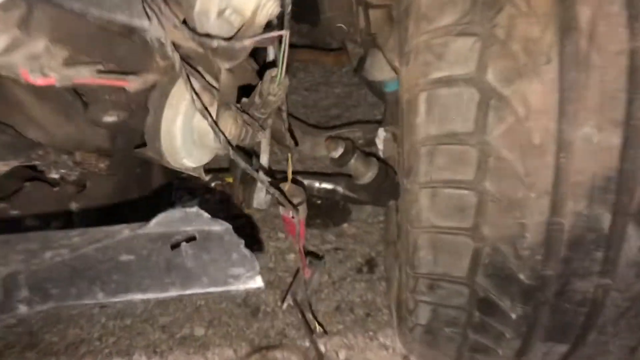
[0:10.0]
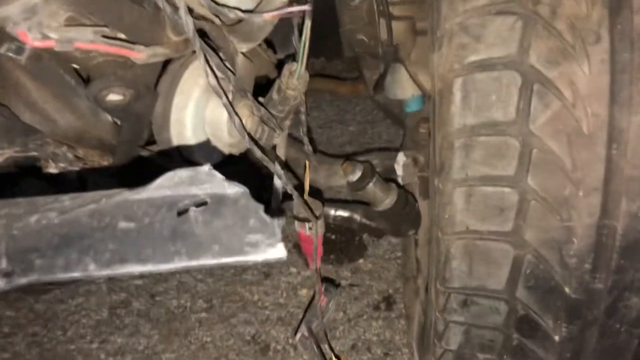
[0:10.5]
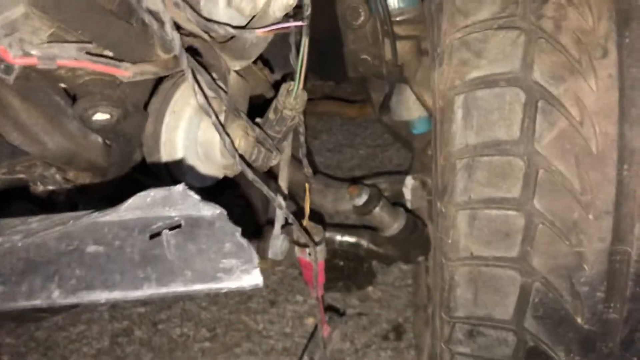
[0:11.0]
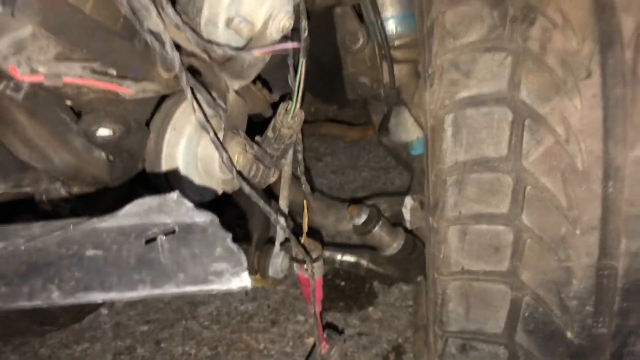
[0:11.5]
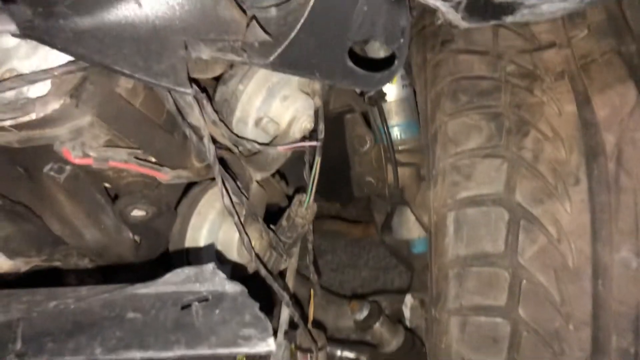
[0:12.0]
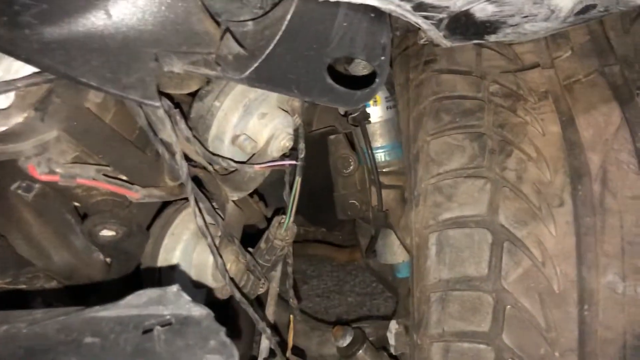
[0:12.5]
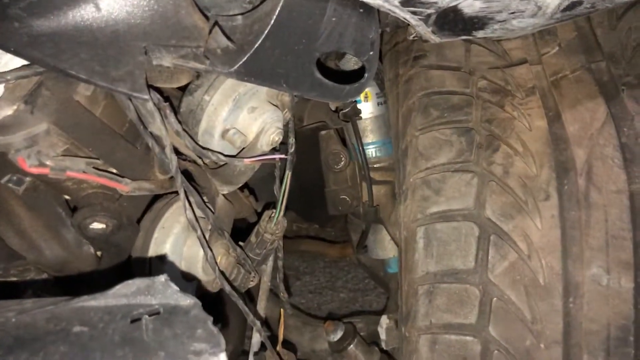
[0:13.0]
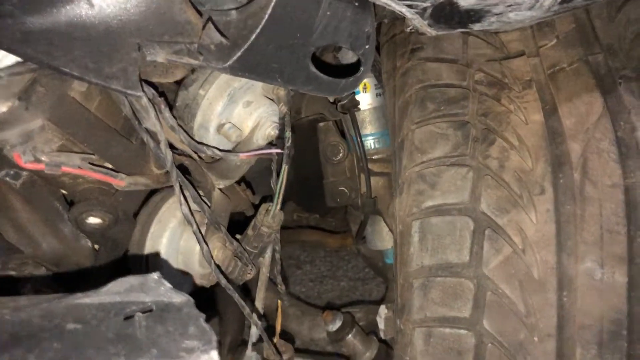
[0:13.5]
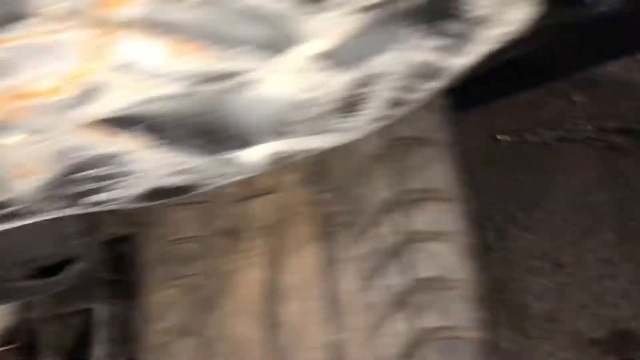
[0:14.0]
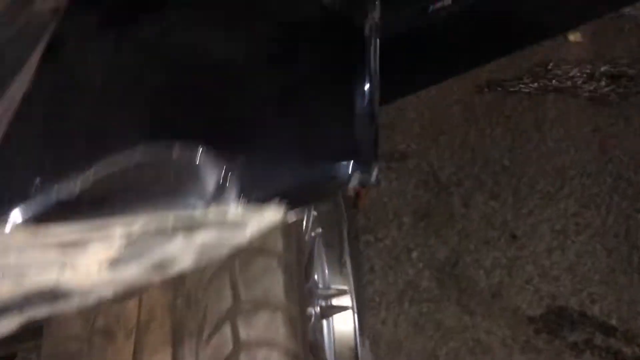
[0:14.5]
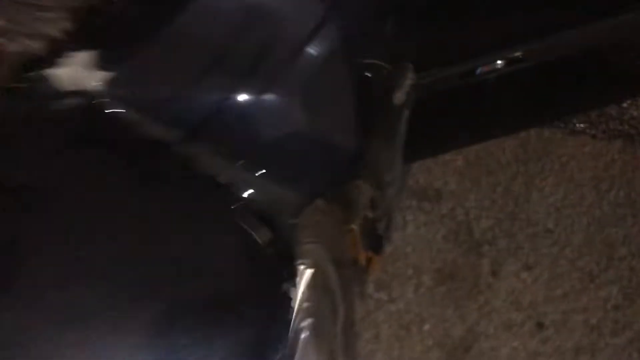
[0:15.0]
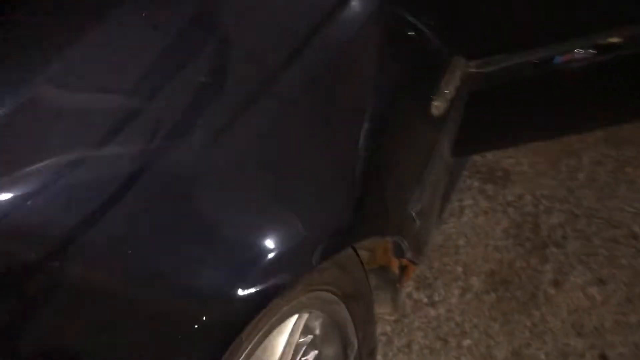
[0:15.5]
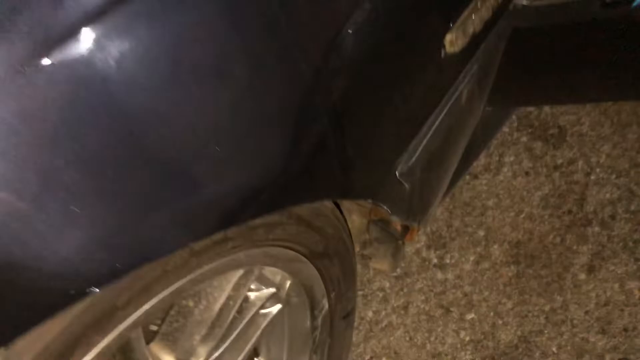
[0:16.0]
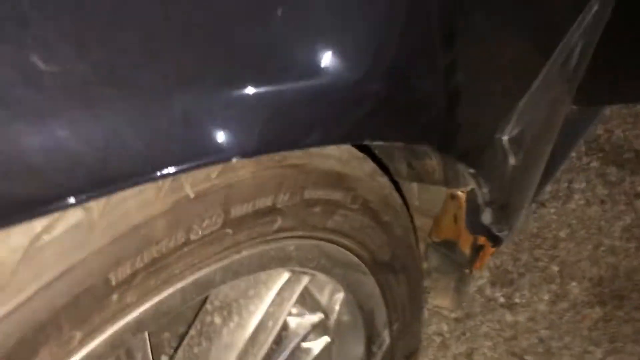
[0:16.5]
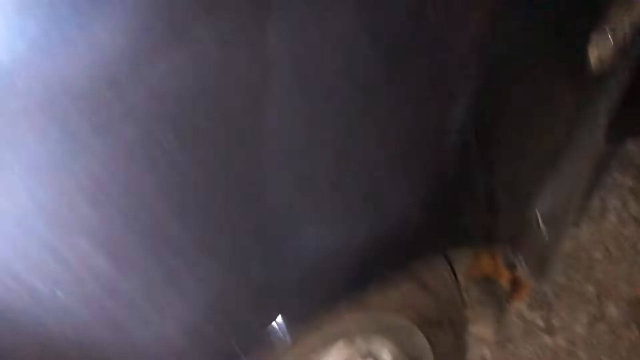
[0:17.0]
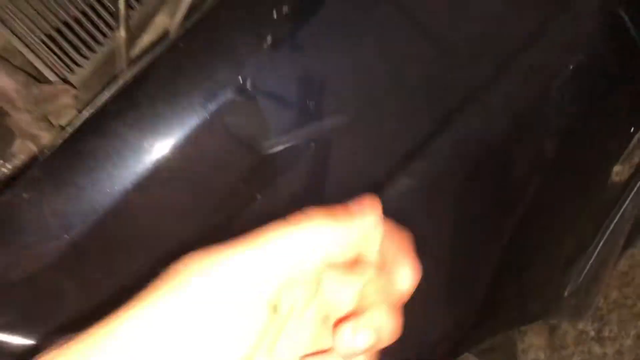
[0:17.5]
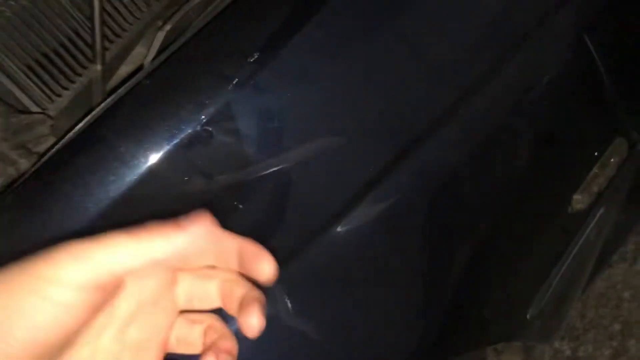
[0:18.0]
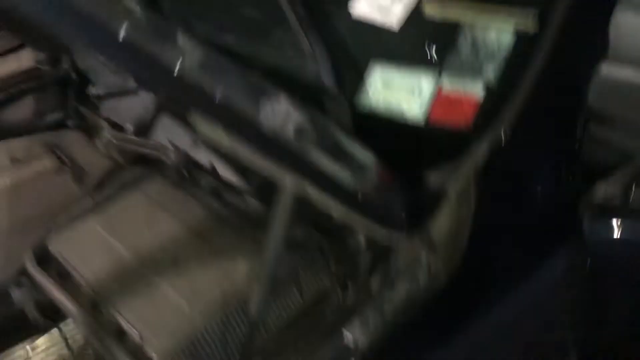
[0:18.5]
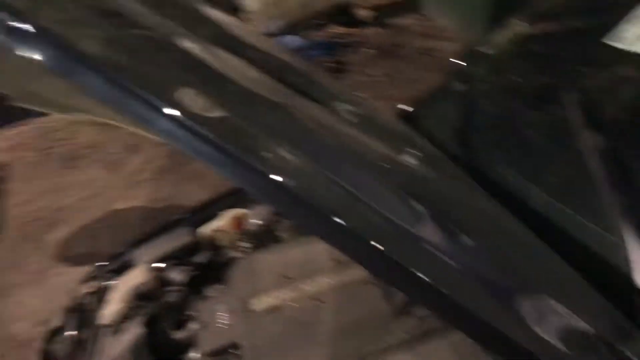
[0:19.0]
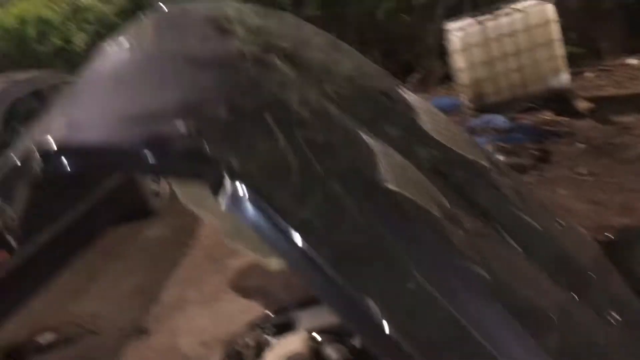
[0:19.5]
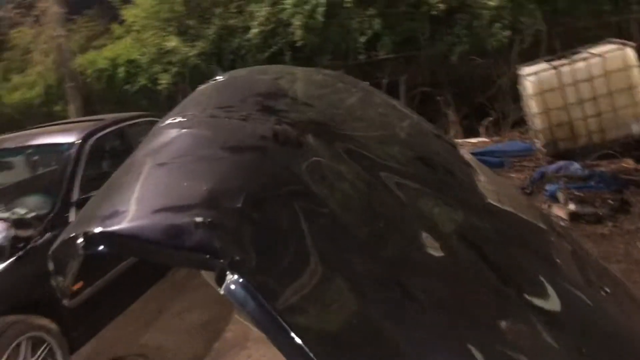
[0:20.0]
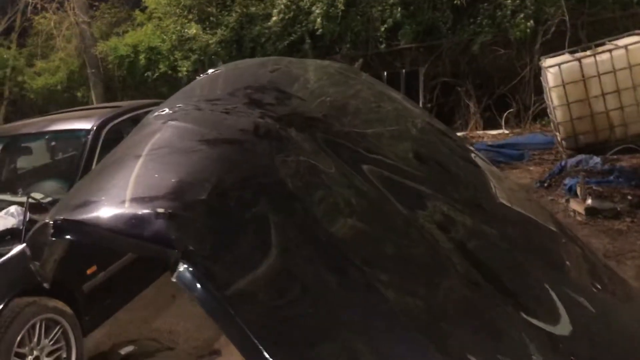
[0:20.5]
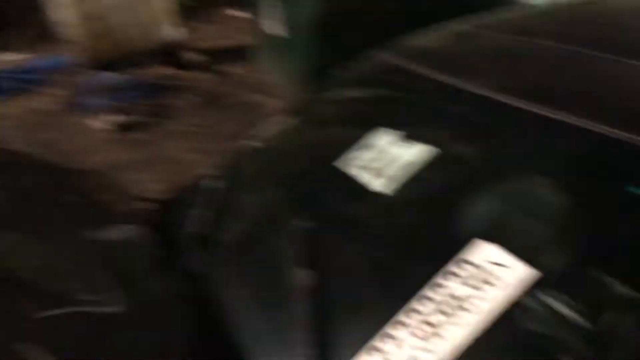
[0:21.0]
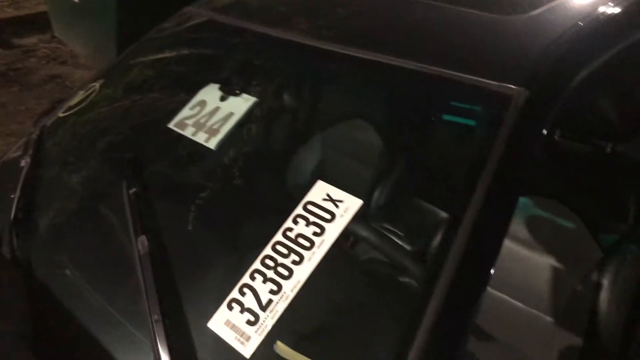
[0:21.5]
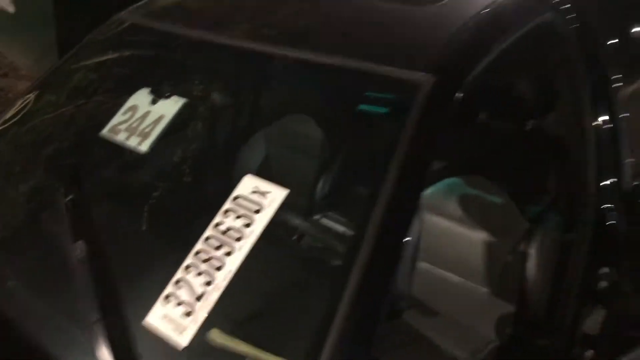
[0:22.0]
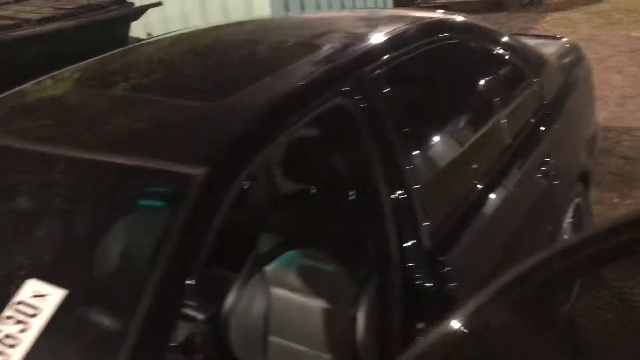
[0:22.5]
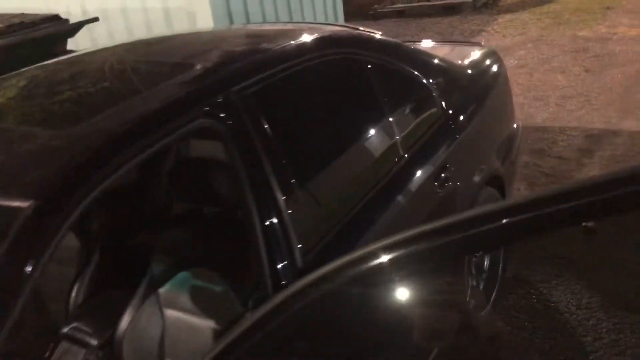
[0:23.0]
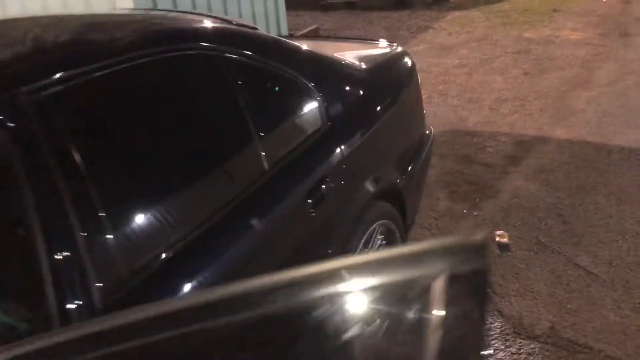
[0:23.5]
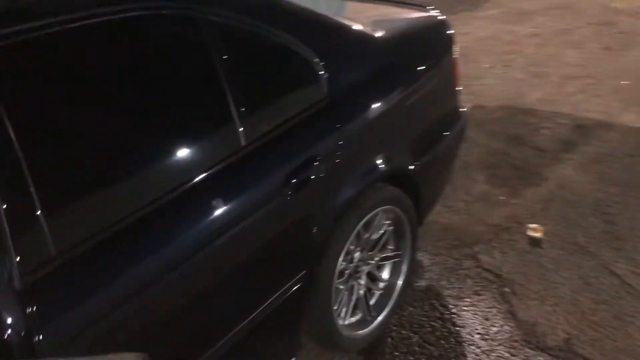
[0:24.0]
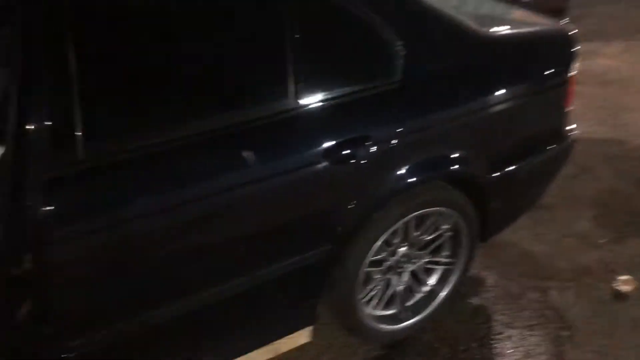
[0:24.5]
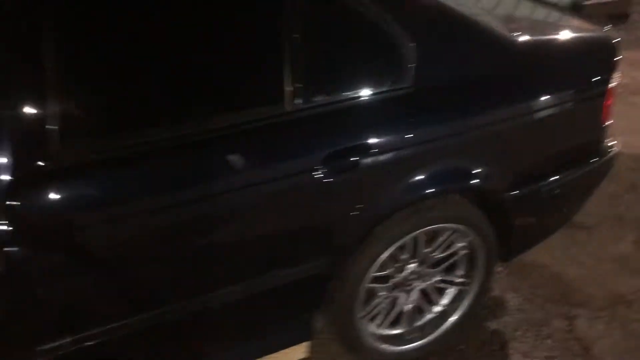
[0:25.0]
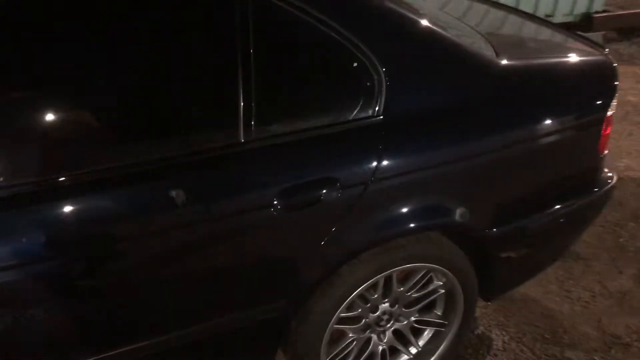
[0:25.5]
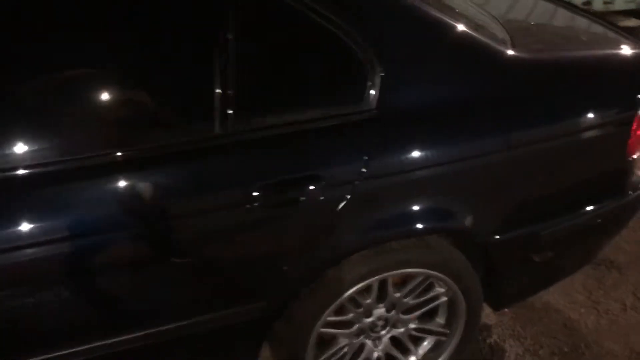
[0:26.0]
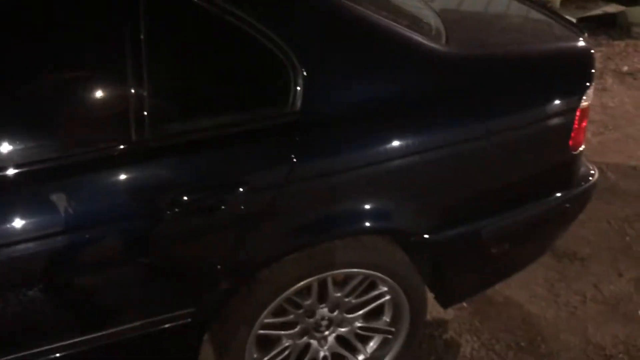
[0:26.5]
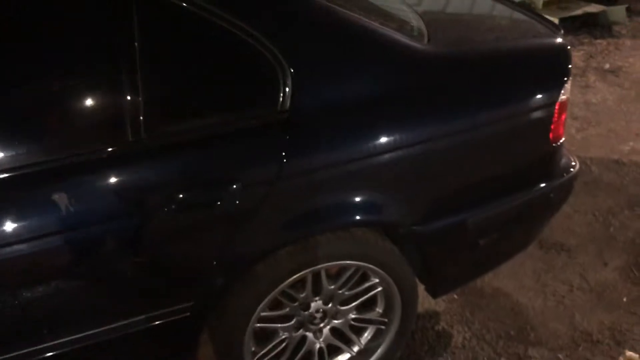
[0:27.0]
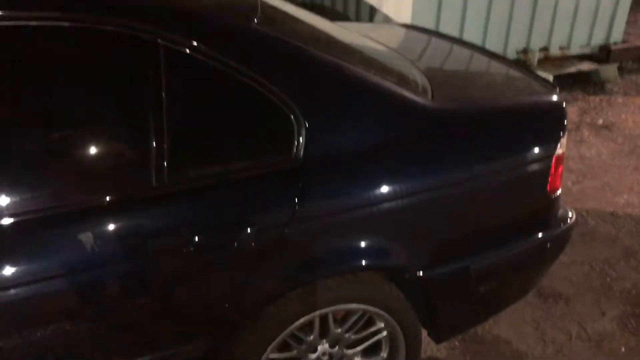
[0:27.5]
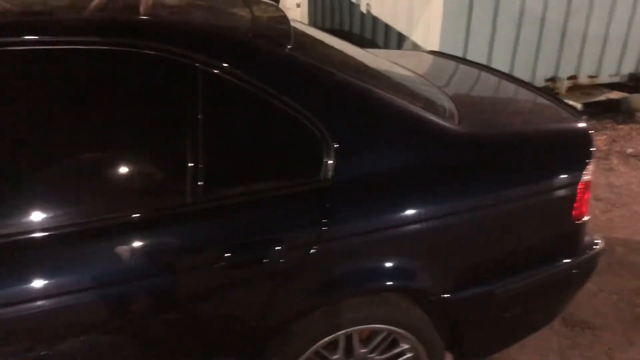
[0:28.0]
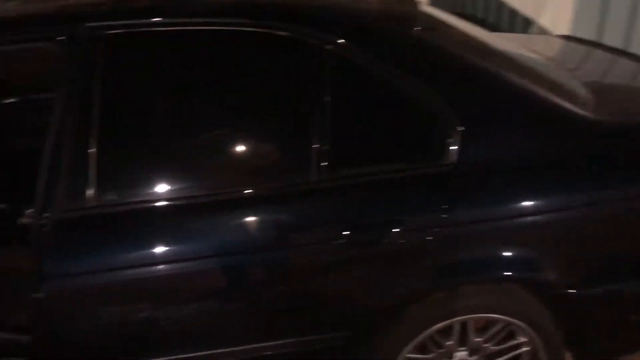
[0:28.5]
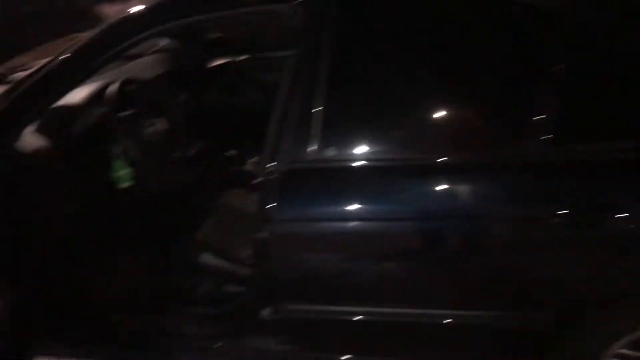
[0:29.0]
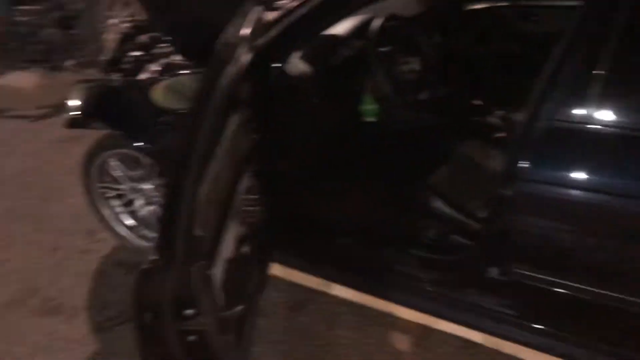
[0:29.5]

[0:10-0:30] The view zooms closer to the left front wheel, showing that the bumper is broken and some damaged parts of the vehicle are hanging on the ground, though the suspension seems to be intact. The front left fender is damaged and bulging. The plate on top of the windscreen reads "32389630", and a number mounted inside the vehicle beneath the rear-view mirror reads "244". The front bonnet is badly bent and out of shape. Moving to the side of the vehicle, it appears to be dark green, although the color is hard to tell at night. The side of the vehicle from the doors to the rear is intact. It is a four-door sedan with a sunroof, which is also intact.